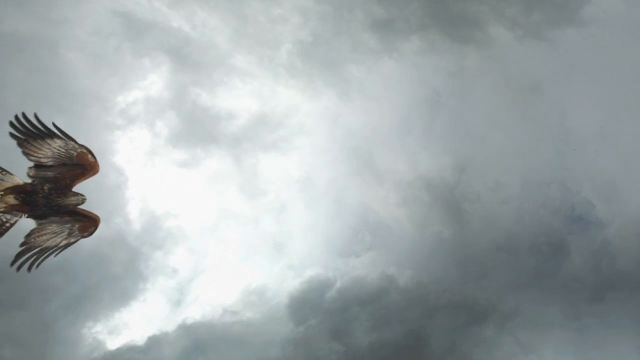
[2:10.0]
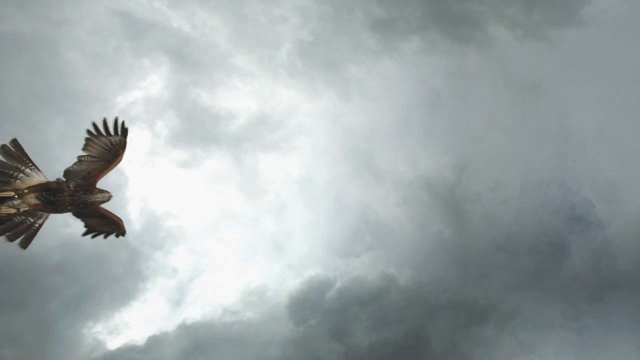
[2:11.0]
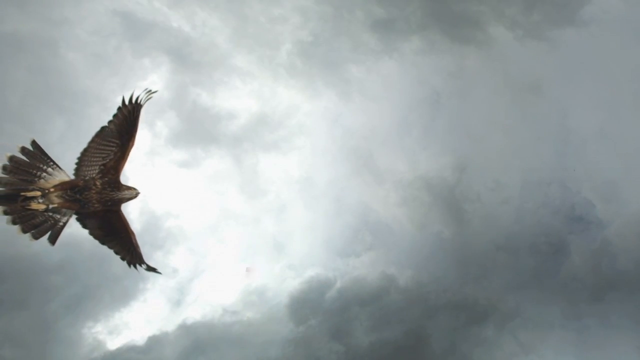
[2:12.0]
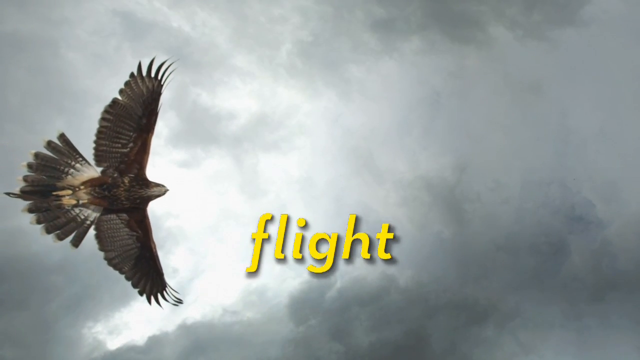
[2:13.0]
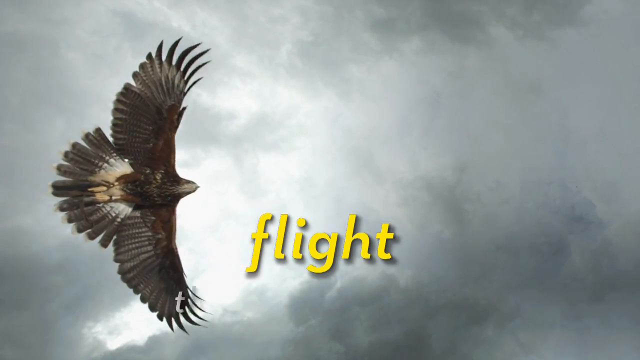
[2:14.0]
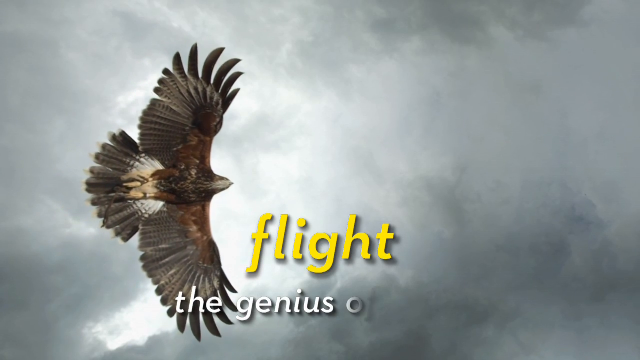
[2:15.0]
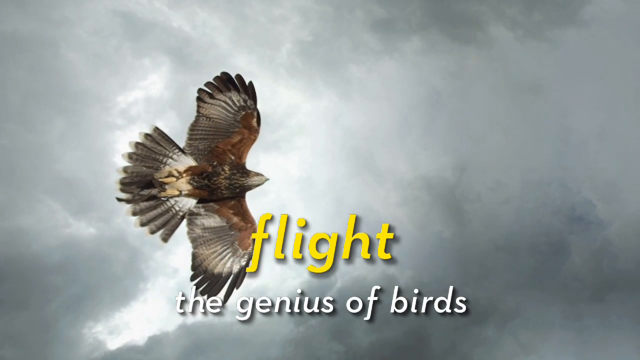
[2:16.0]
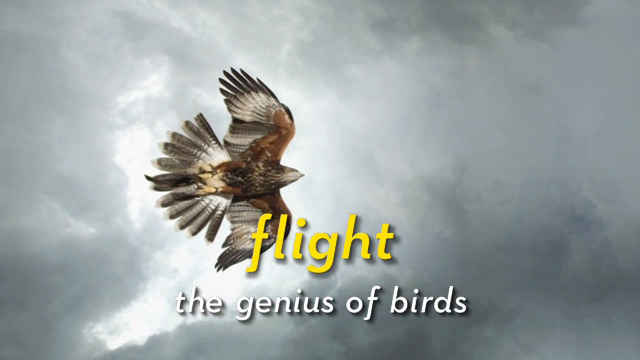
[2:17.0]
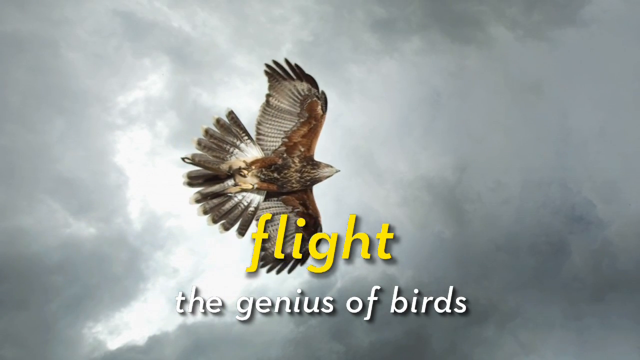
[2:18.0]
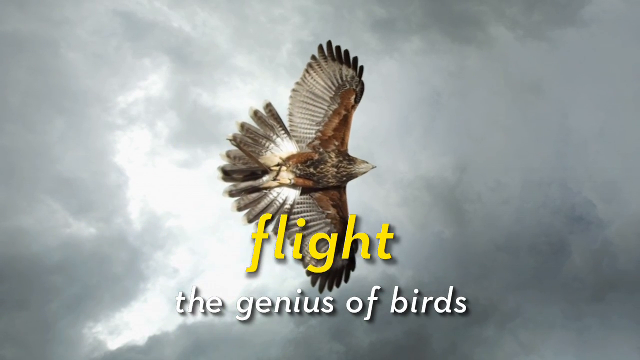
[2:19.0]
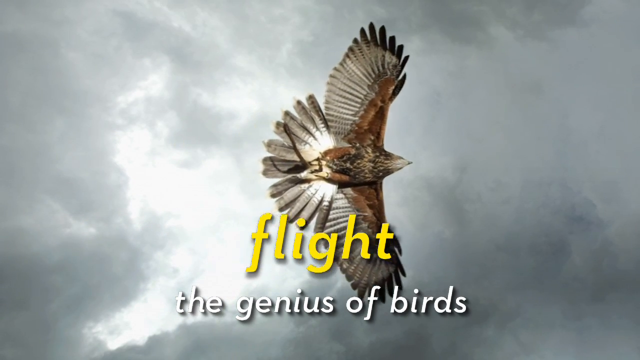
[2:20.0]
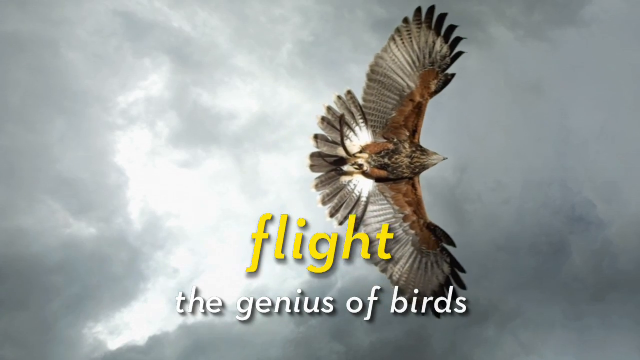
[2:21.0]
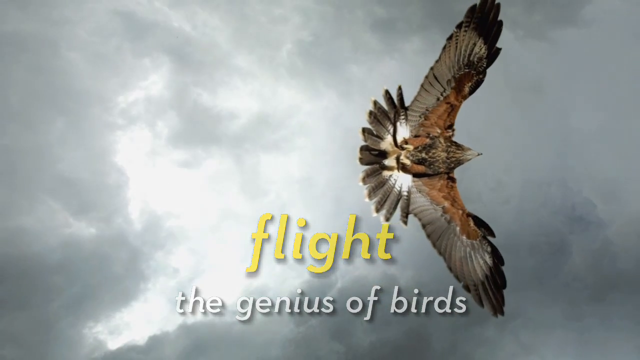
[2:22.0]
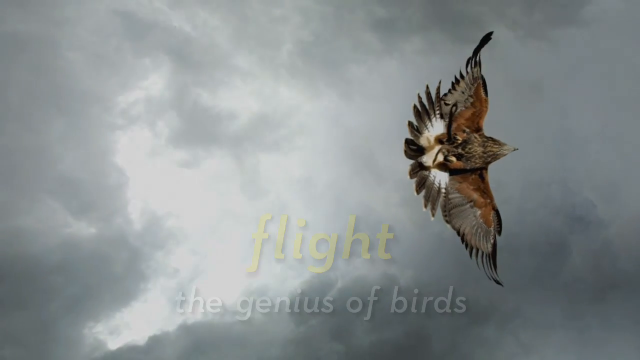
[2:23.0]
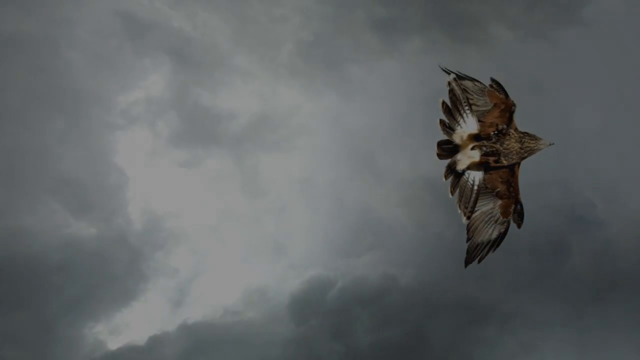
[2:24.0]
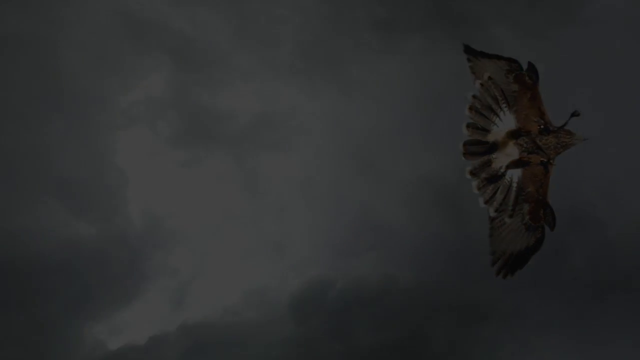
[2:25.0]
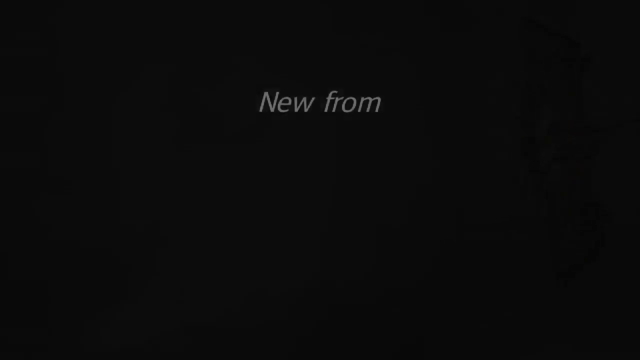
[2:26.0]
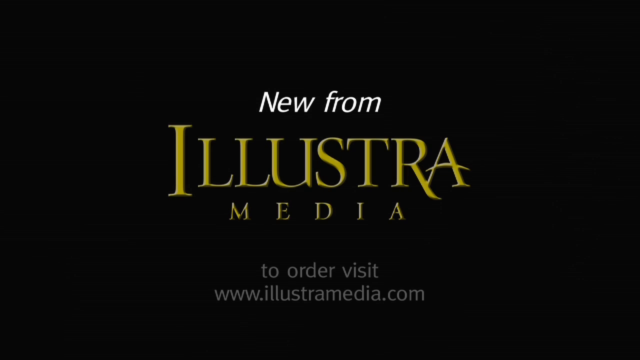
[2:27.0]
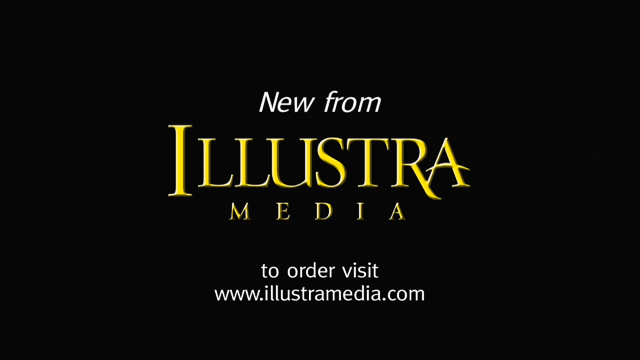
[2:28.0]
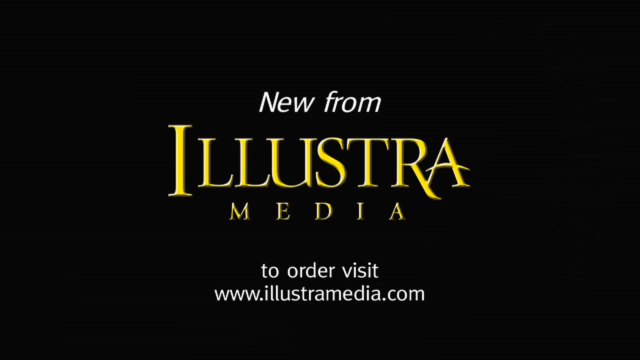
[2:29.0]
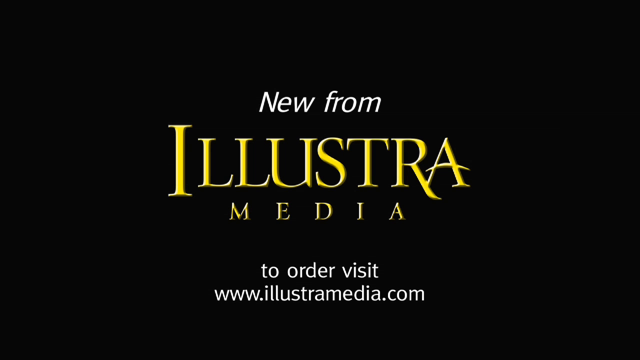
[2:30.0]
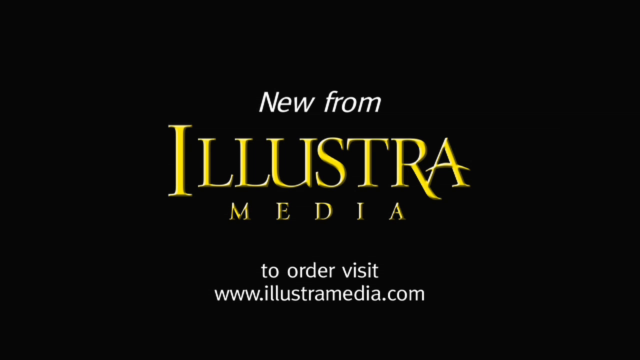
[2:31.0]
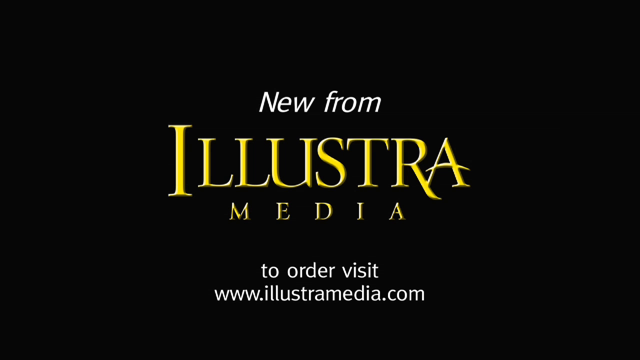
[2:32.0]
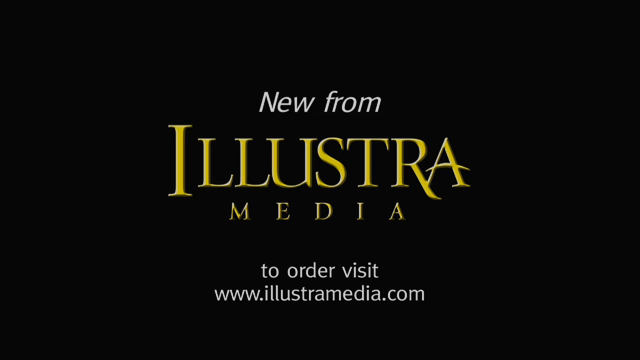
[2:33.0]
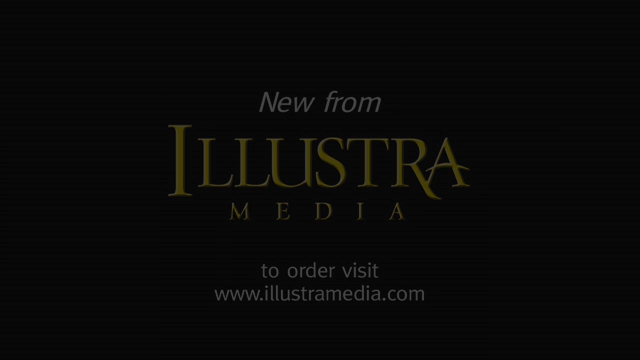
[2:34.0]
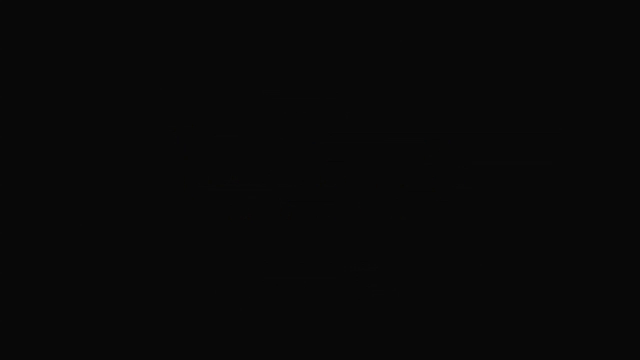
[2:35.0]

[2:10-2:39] A big bird flies, seen from underneath. Text appears reading "fly" in yellow letters, with "the genius of birds" below it in white letters. The bird flies in front of a dark-colored sky, all the way across the screen. New text then appears: "new from" in white, "Illustra media" in yellow, and "To order, visit www.illustramedia.com" in white, so this is apparently a documentary about birds. A bird of prey, perhaps a hawk, is seen from its underside: its wings are brown, then white, then black, its tail is white with black chipped feathers, its body is grayish with small dark flecks, and its beak is gray. It starts flying on the left side of the picture and goes all the way across.